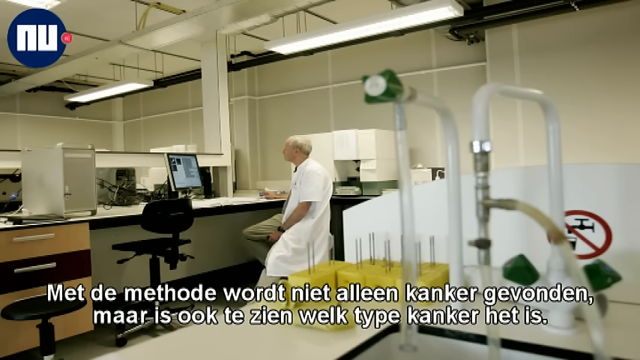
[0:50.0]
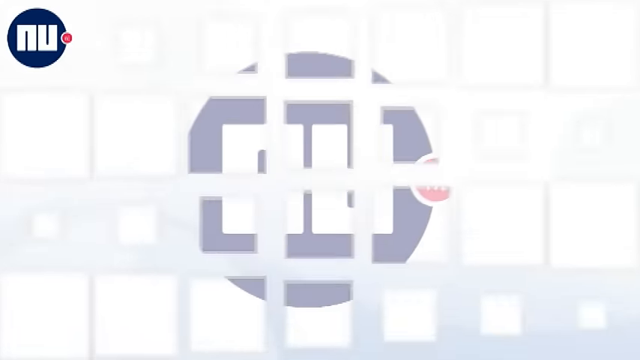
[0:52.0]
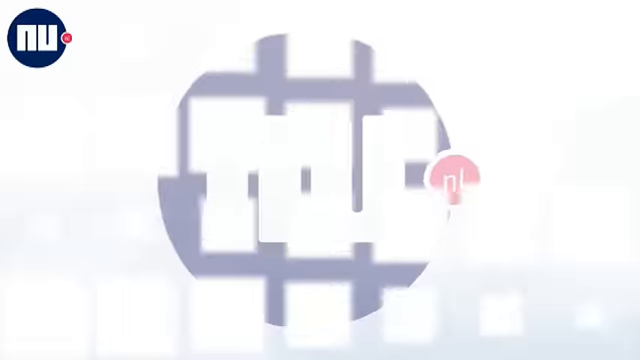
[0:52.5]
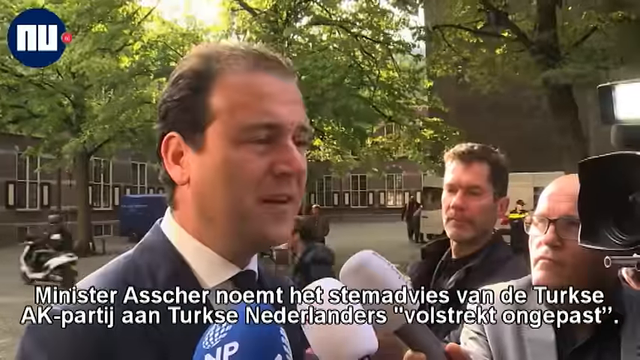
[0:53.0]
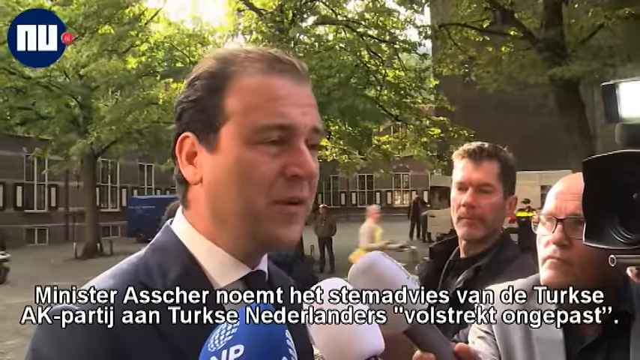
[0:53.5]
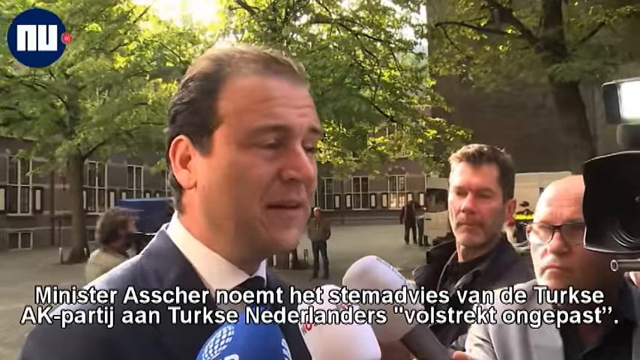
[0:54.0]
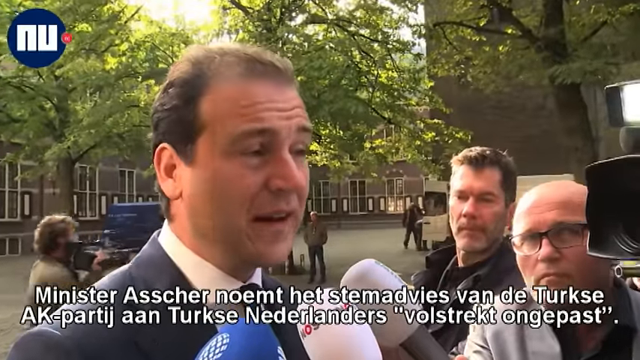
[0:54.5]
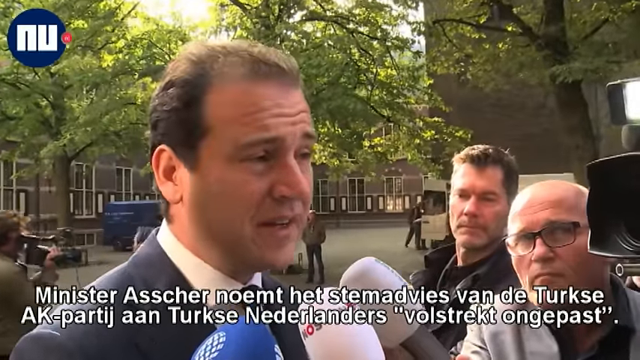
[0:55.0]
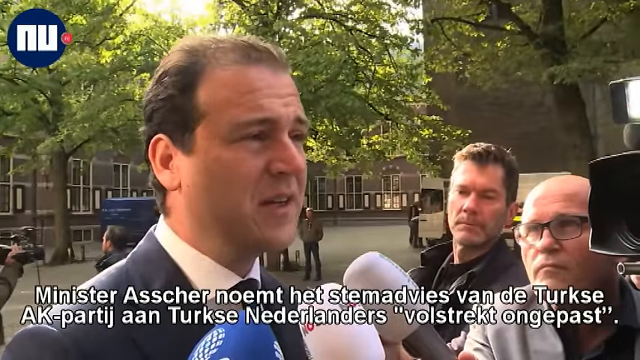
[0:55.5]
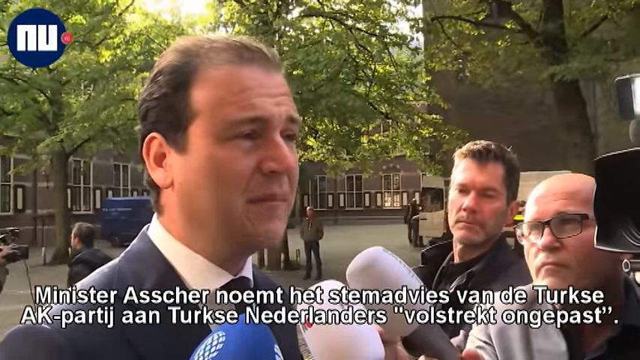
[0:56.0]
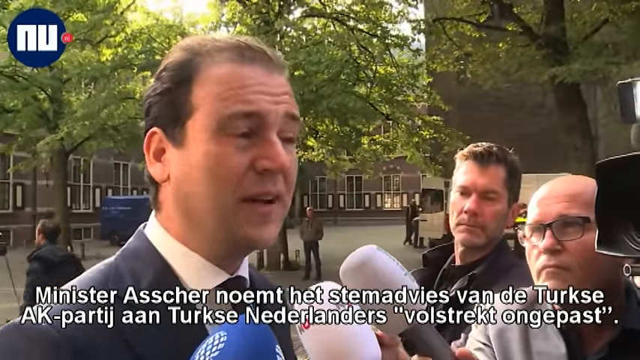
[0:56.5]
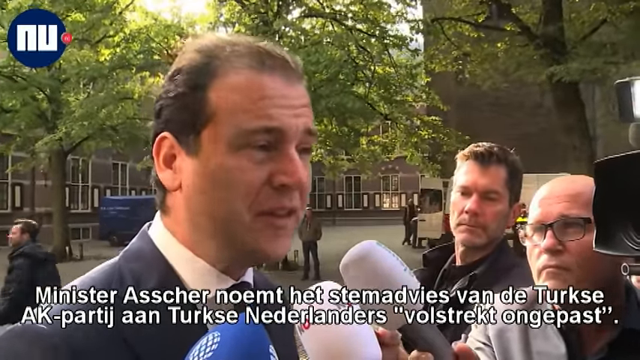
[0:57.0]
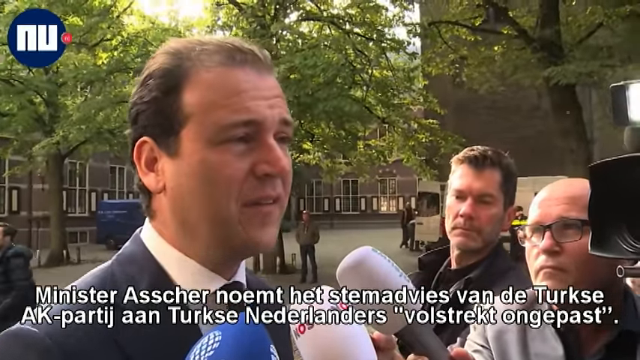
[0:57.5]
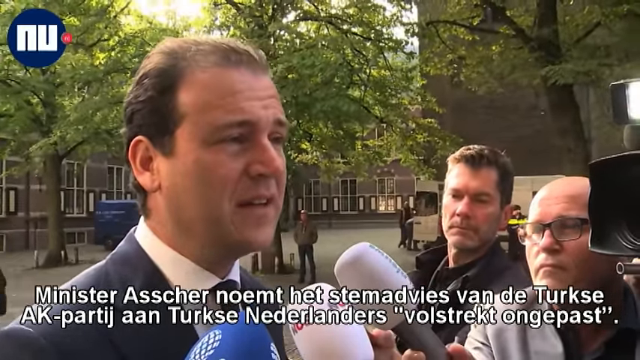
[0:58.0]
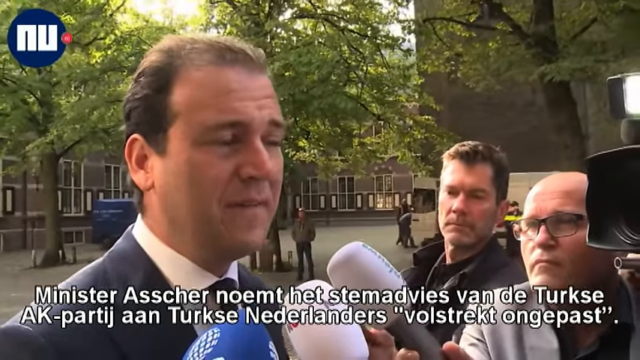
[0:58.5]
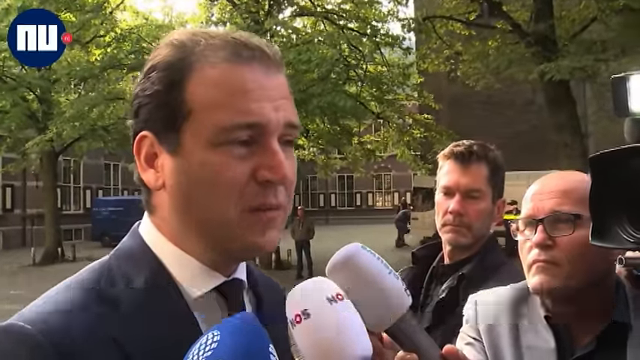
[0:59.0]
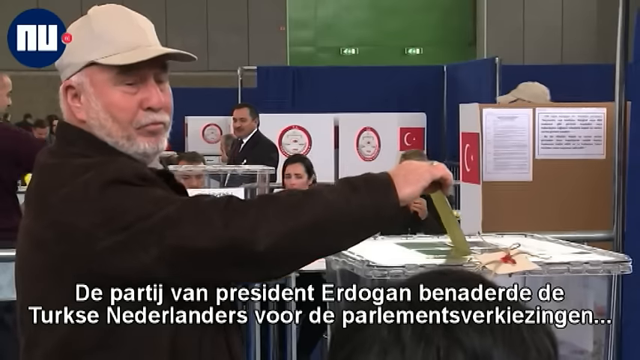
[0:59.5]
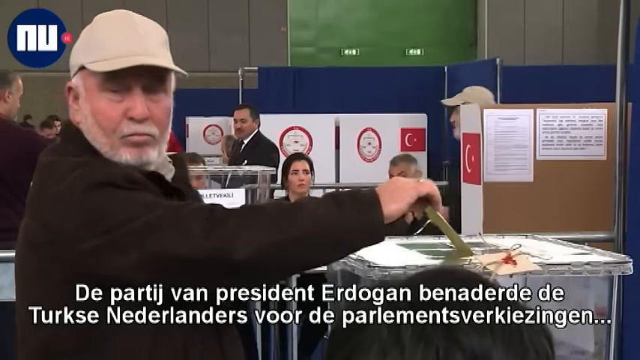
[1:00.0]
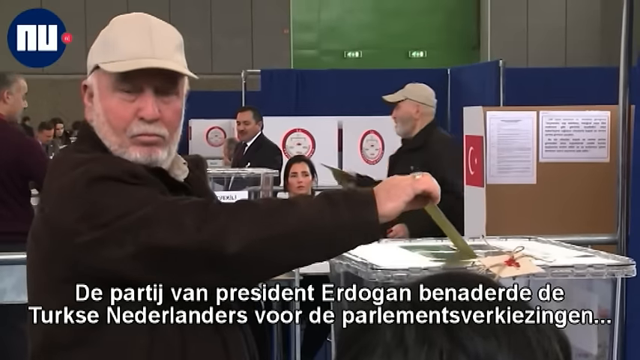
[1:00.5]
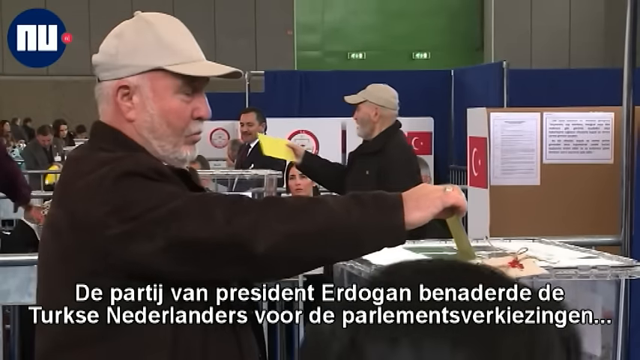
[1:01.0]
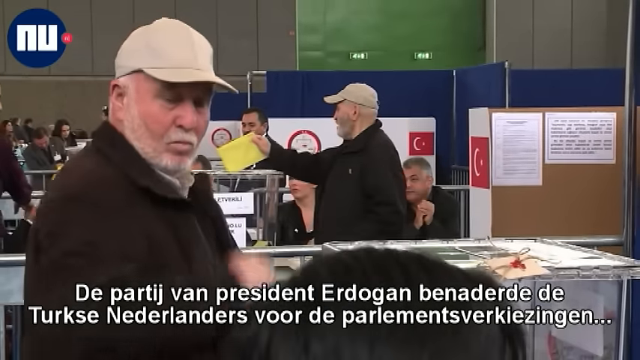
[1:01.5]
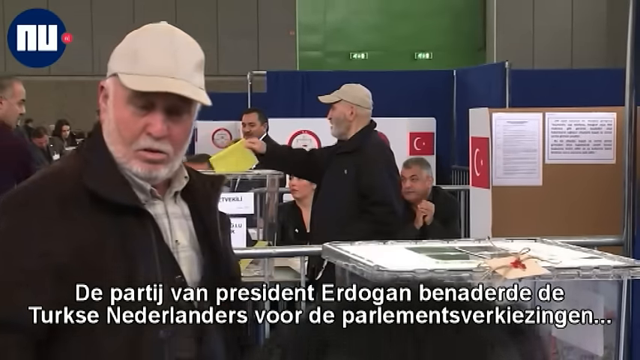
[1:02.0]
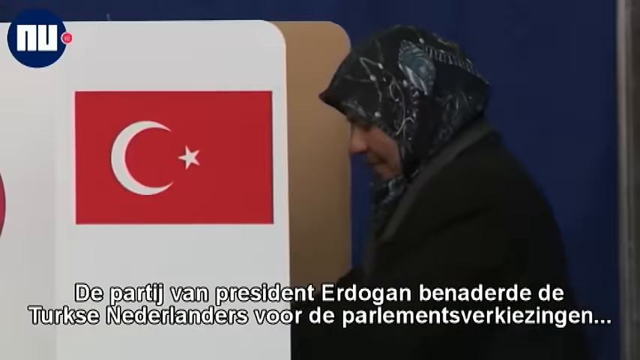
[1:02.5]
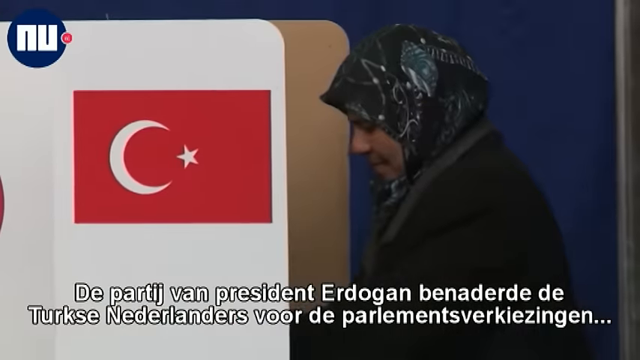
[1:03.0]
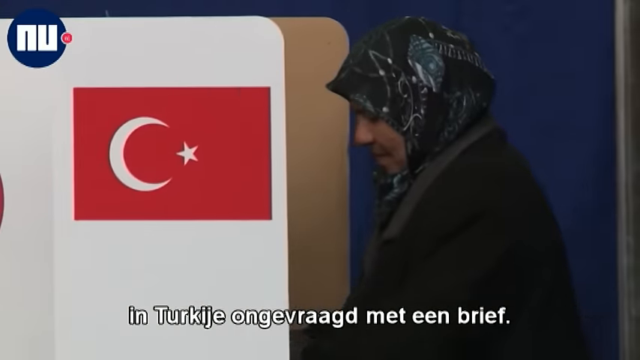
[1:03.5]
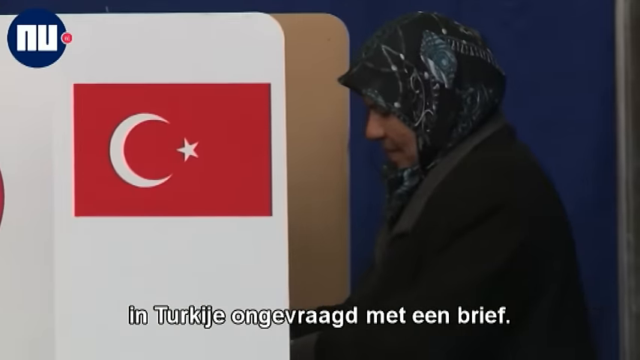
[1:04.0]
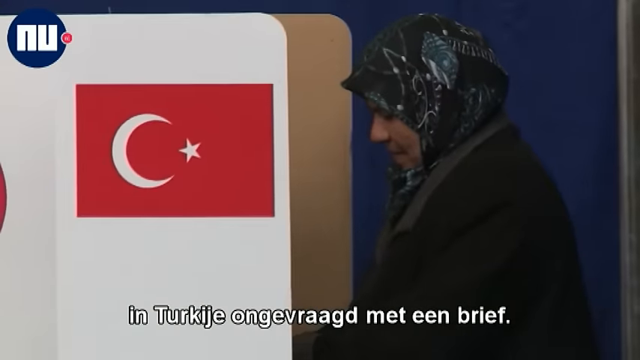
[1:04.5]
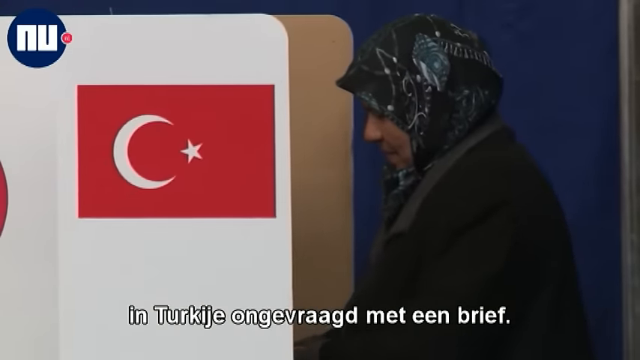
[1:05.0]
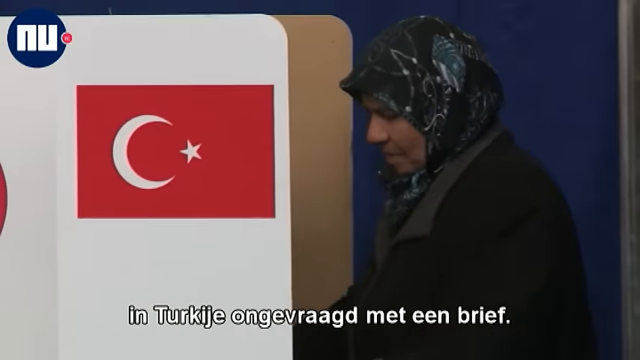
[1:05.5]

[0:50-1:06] The footage of the medical professionals in the blood laboratory continues. One word in the German caption is "Kanker", apparently meaning cancer, so this seems to be a lab that tests blood for signs of cancer. Next, someone named Minister Asseher is interviewed outside on a stone patio under some trees, and the captions seem to indicate something about Turkey and the Netherlands. The scene then changes slightly to show people voting in an election, apparently in Turkey, since there are Turkish flags everywhere, and one of the words in the caption is "Erdogan". A woman wearing a hijab votes, and a white-haired man votes. The story seems to concern either a Turkish election or Turkey and the Netherlands.